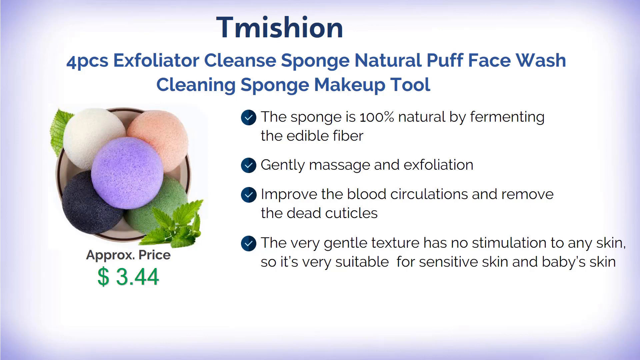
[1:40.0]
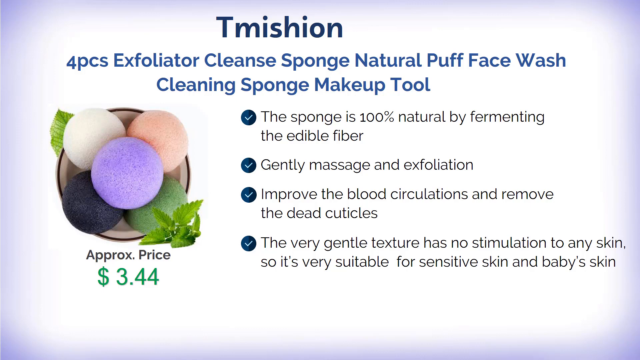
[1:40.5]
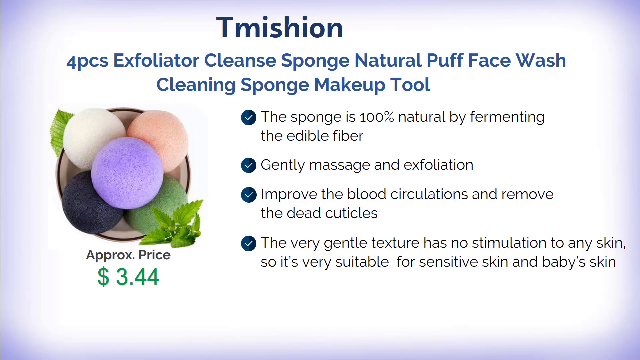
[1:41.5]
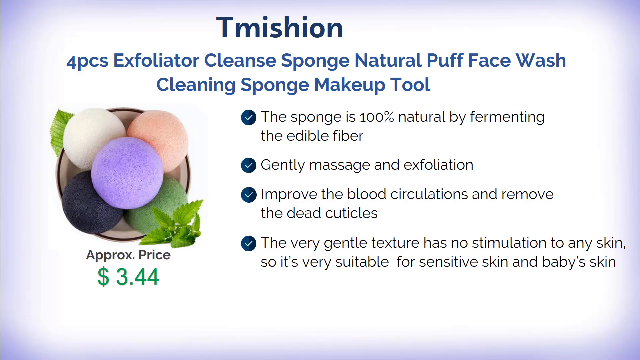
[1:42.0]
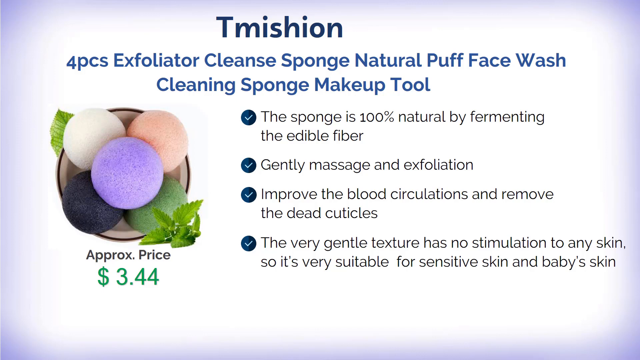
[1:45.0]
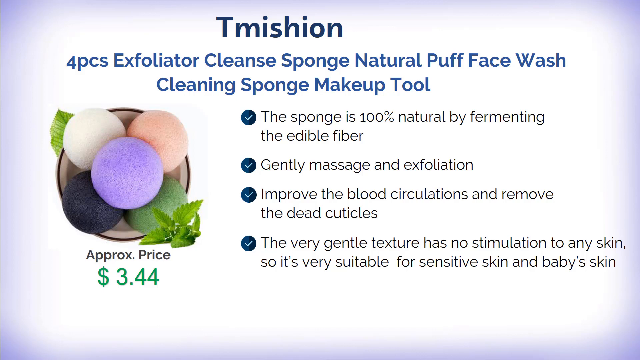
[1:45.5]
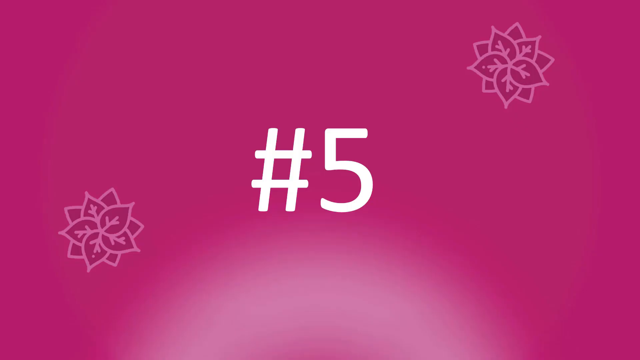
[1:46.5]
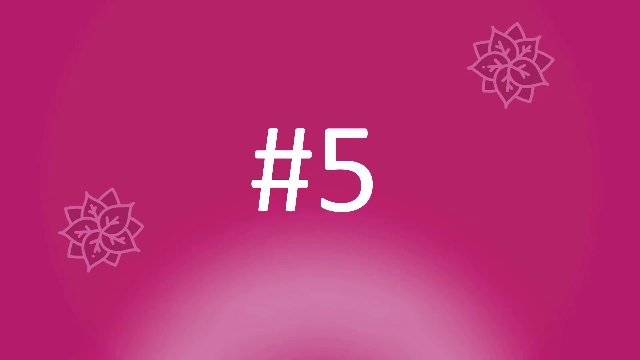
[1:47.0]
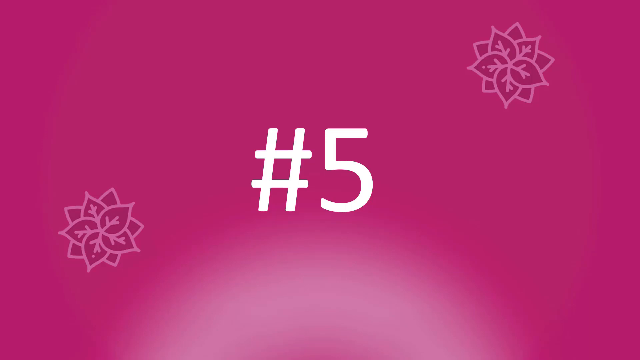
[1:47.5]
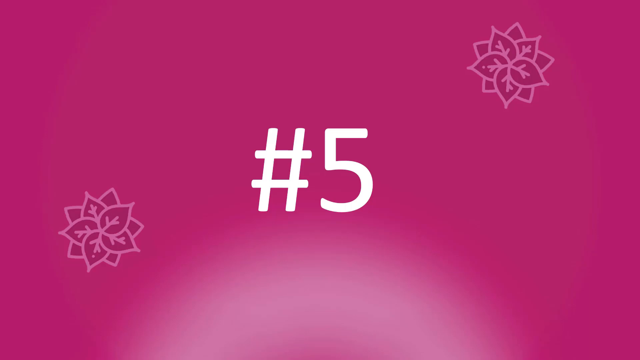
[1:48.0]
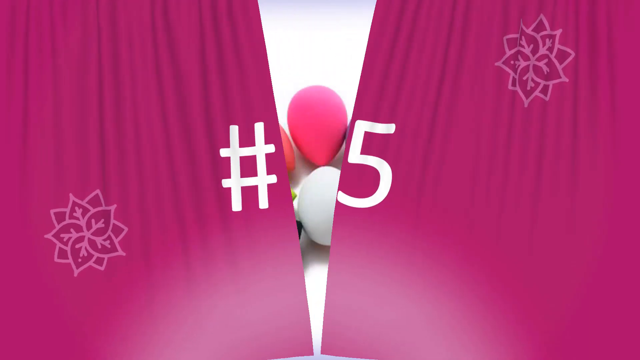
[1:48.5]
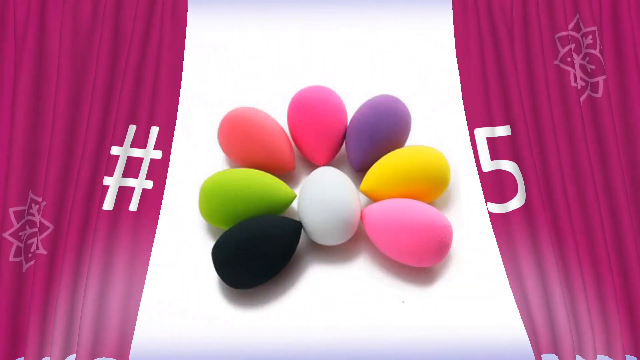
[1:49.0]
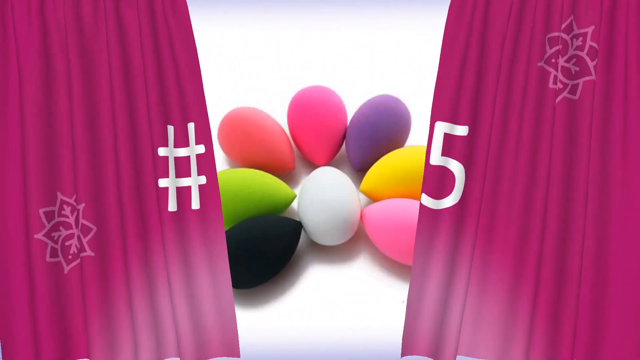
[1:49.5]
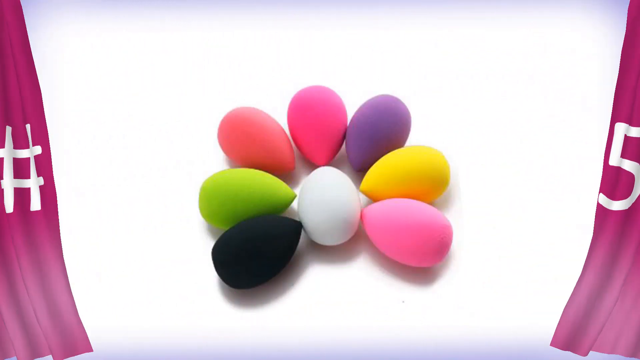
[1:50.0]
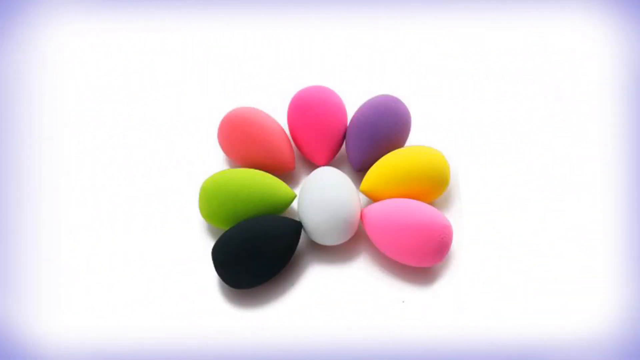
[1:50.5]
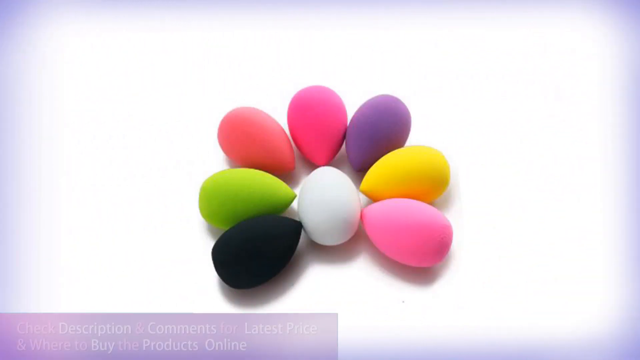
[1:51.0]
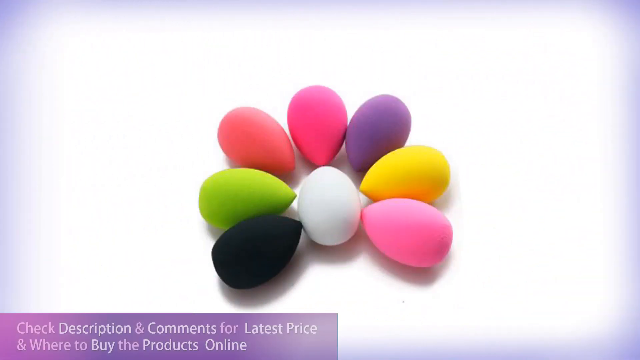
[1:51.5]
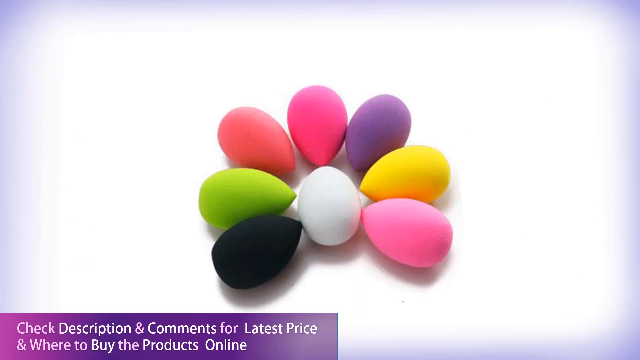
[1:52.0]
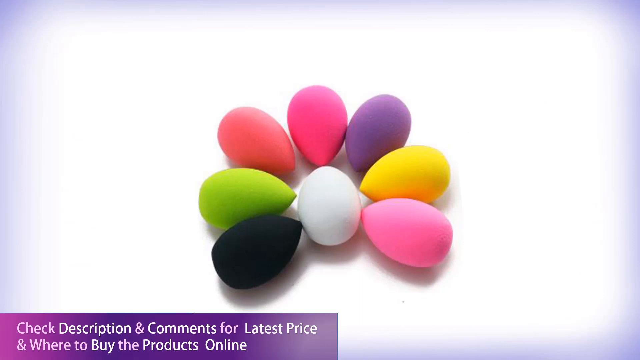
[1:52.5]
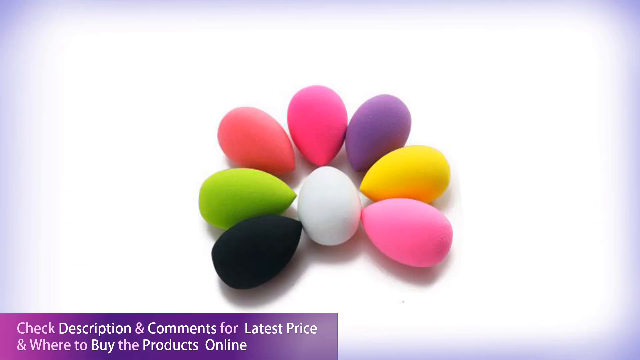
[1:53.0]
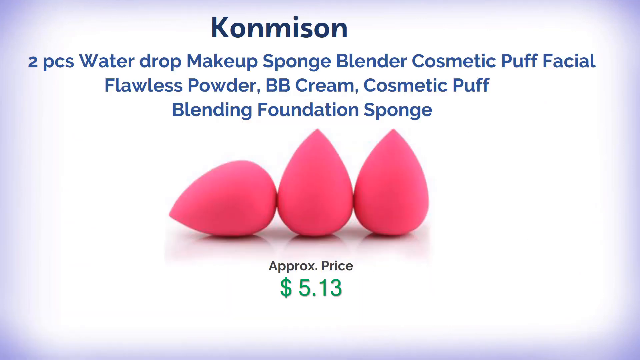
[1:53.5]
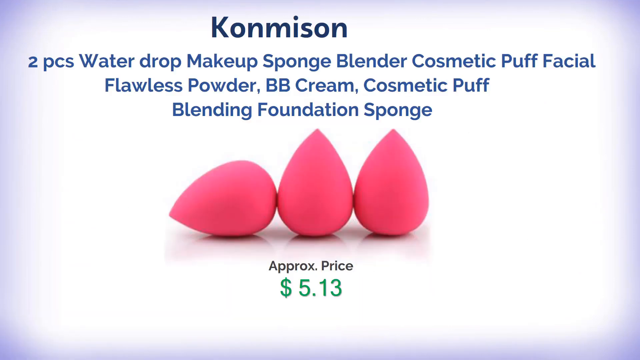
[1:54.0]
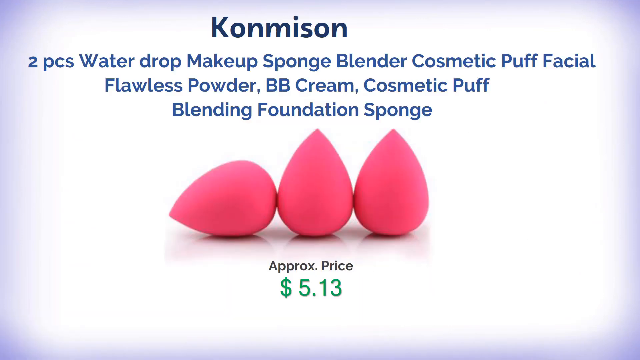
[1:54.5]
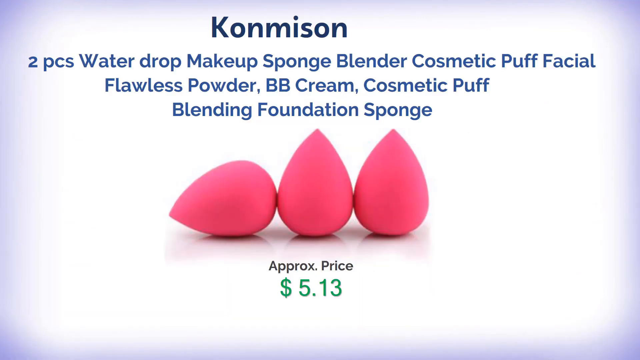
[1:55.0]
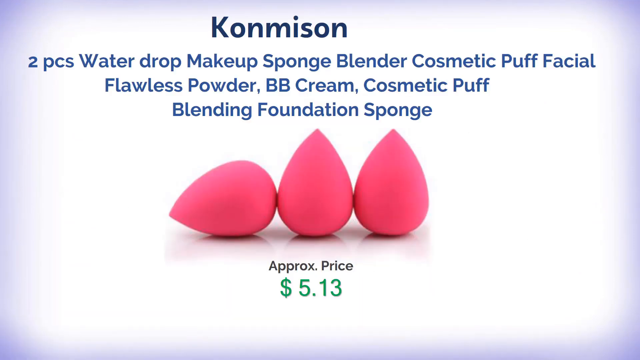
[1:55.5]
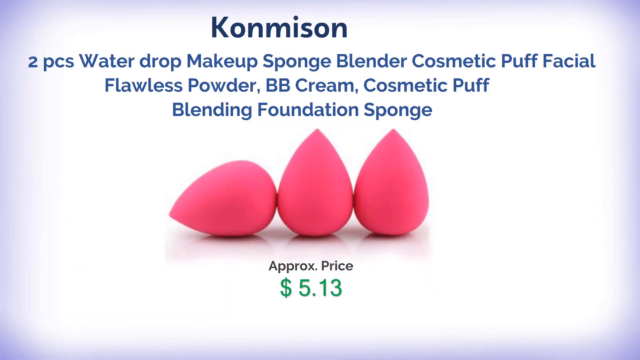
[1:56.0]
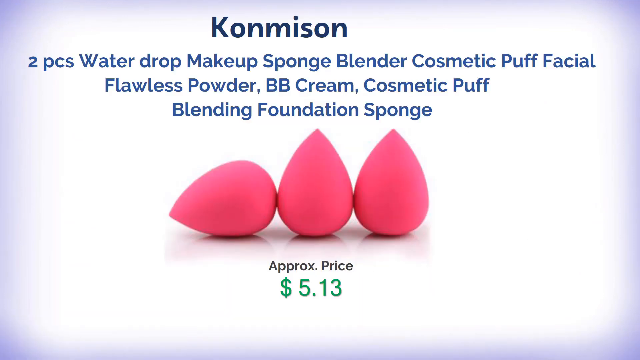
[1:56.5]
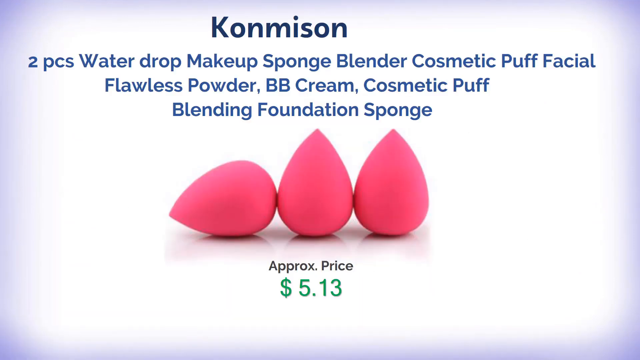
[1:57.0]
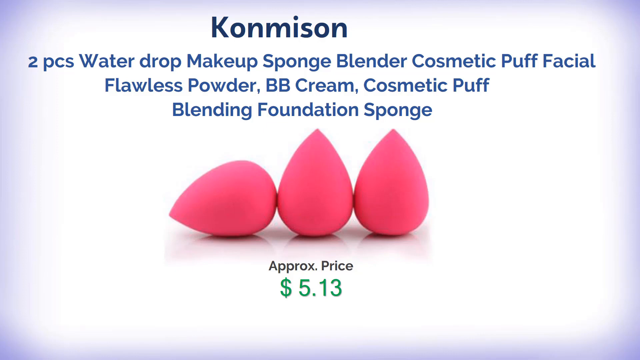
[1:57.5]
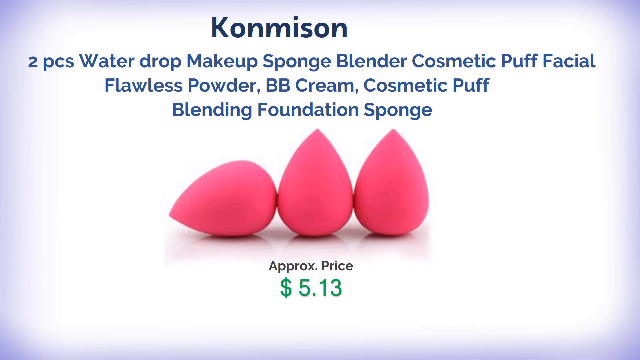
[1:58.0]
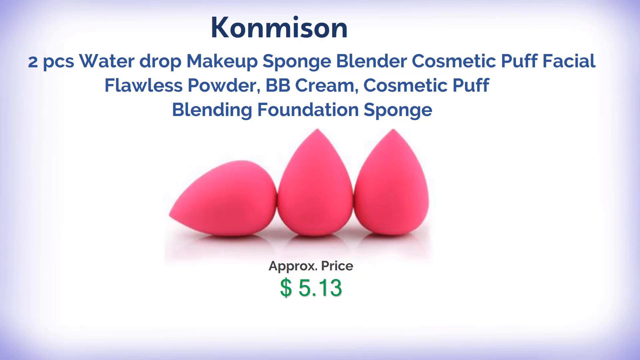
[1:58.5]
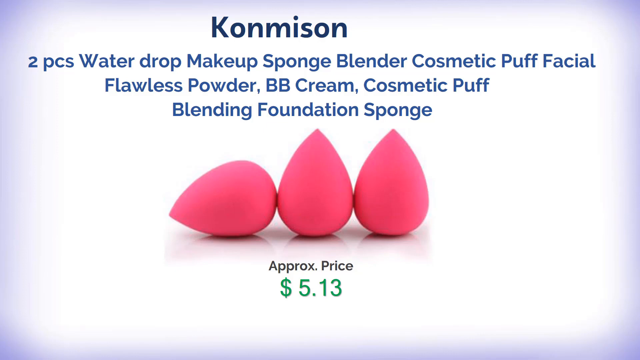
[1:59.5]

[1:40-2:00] A white background carries lots of text in the foreground. At the very top, dark blue text reads "TMISHION". Below it, blue text reads "PORPCS Exfoliator Clean Sponge Natural Puff Face Wash Cleaning Sponge Makeup Tool". Below that, black text reads "the sponge is 100% natural by fermenting the edible fiber. Gently massage and exfoliation, improve the blood circulations and remove the dead cuticles. The very gentle texture has no stimulation to any skin, so it's very suitable for sensitive skin and baby skin." On the left side, beside the text, four multicolored objects sit in a bowl, in white, a kind of peach color, purple, green, and dark blue. Below the image, black text reads "approximate price", and below that green numbers read "$3.44".